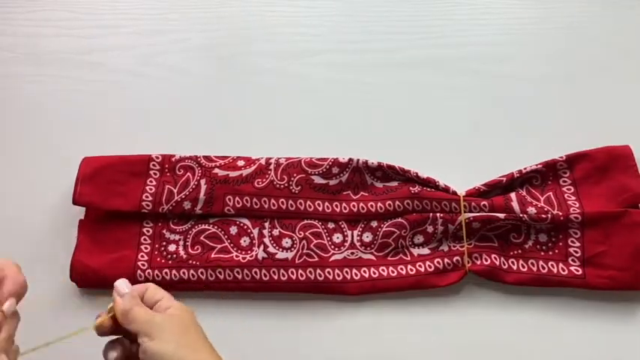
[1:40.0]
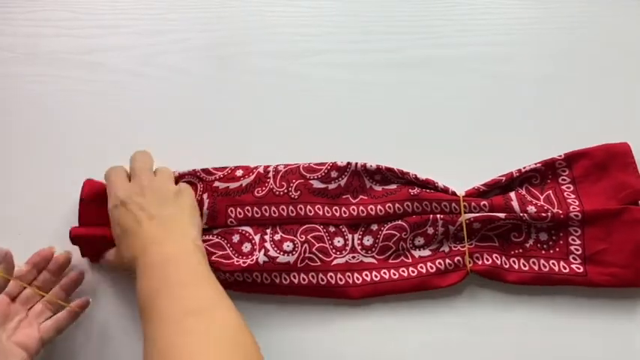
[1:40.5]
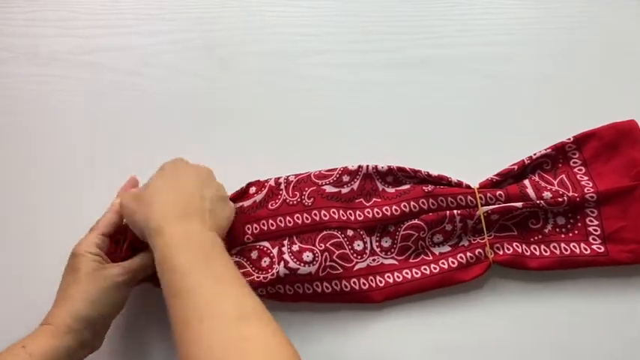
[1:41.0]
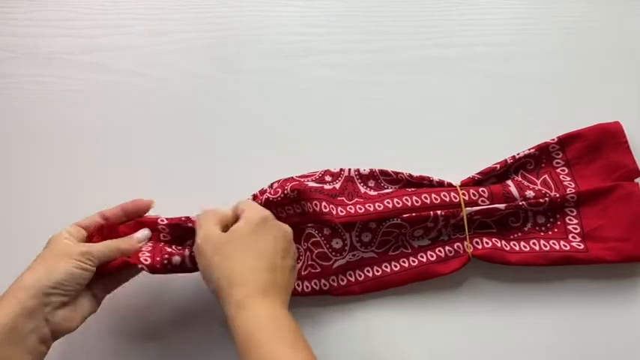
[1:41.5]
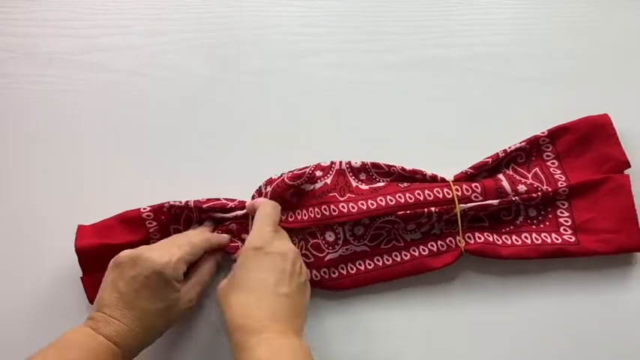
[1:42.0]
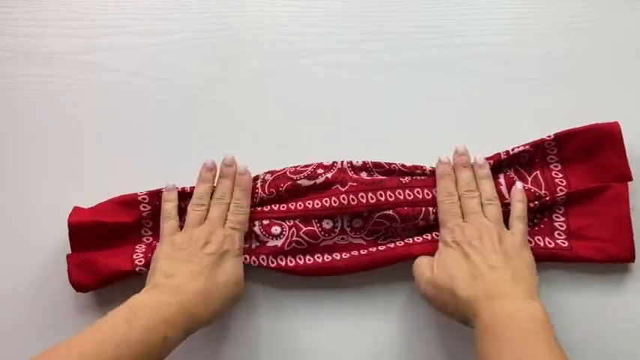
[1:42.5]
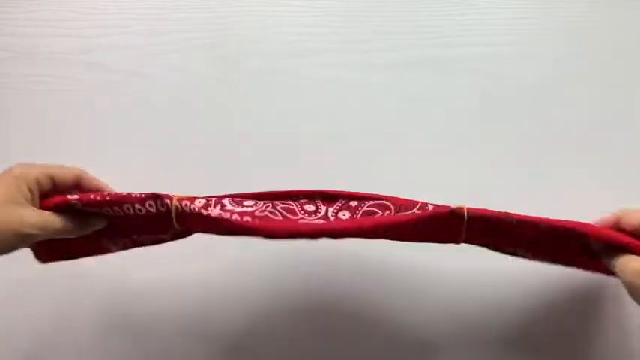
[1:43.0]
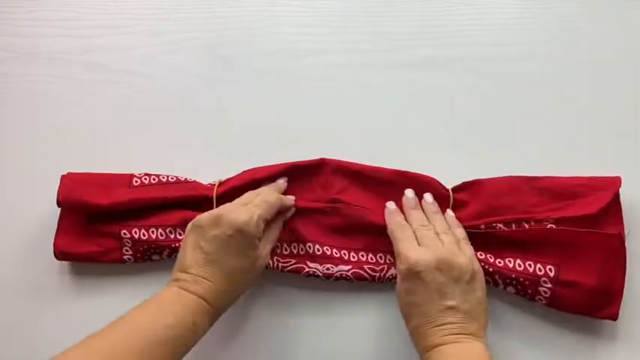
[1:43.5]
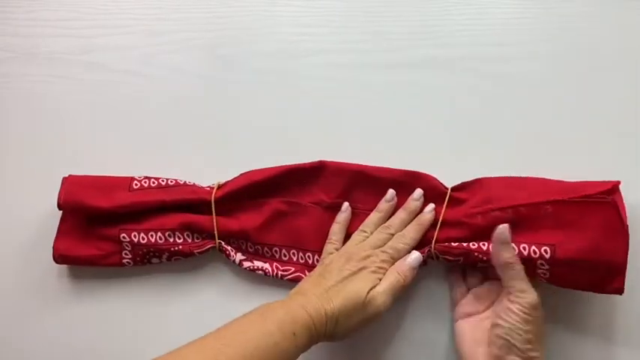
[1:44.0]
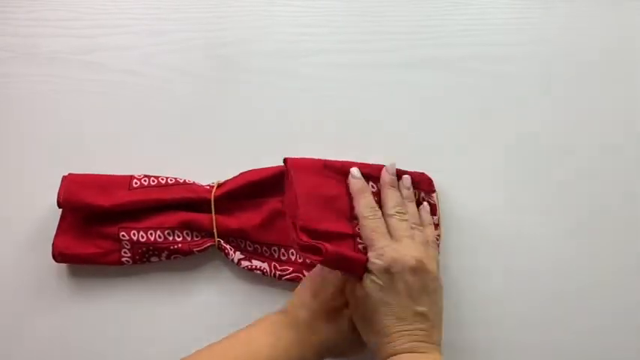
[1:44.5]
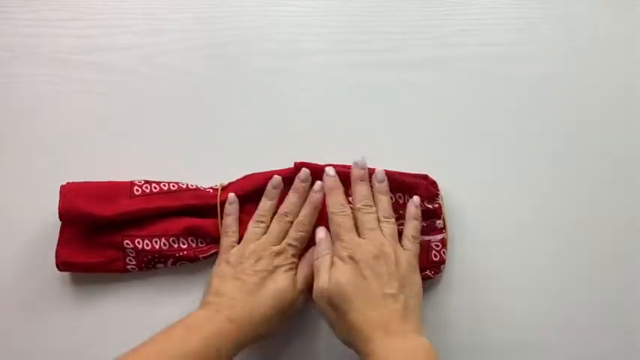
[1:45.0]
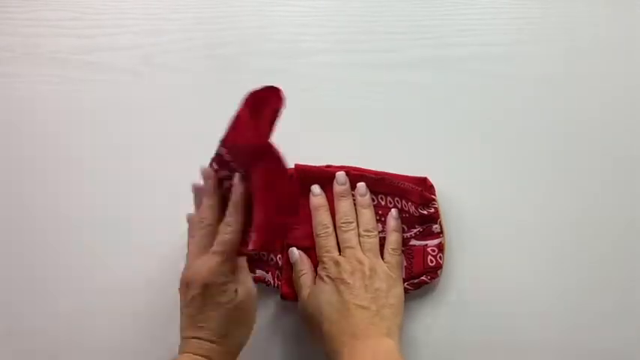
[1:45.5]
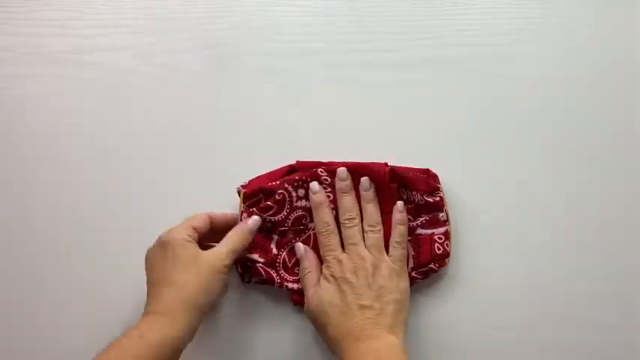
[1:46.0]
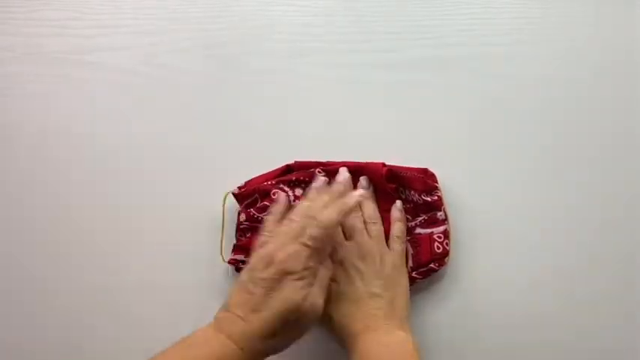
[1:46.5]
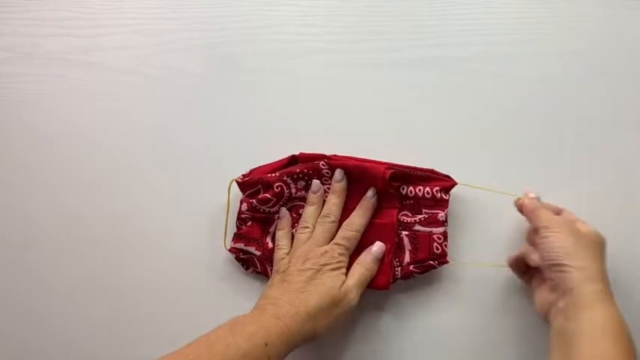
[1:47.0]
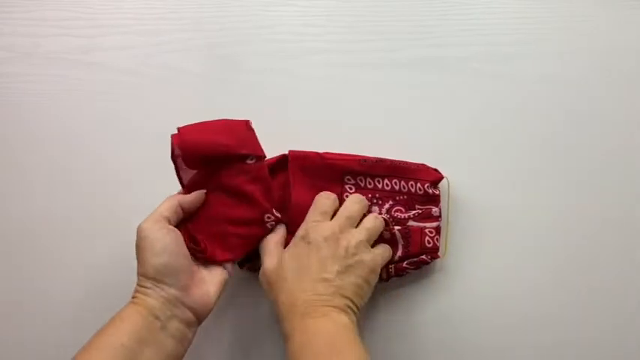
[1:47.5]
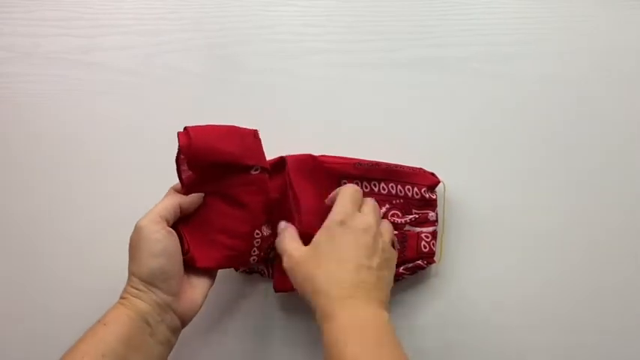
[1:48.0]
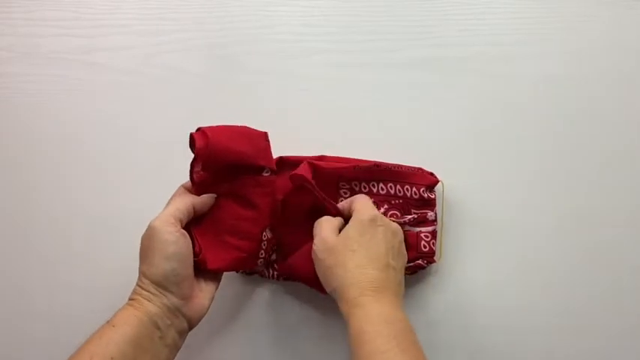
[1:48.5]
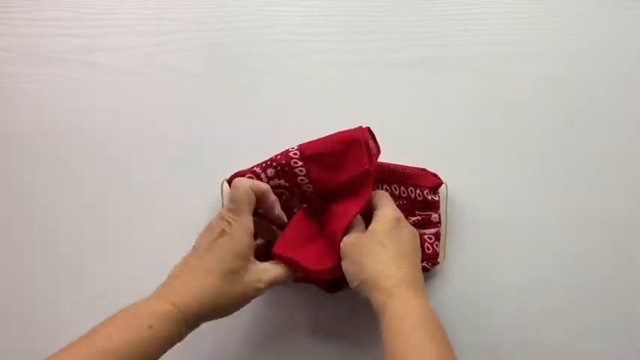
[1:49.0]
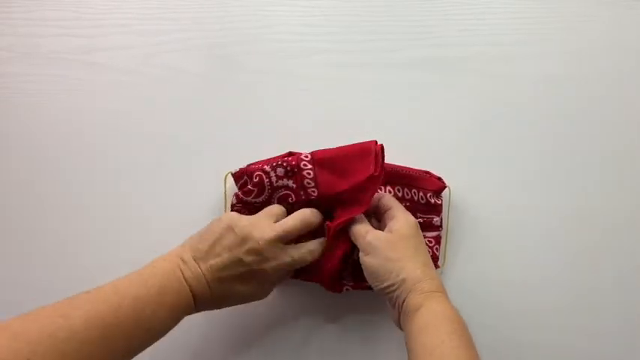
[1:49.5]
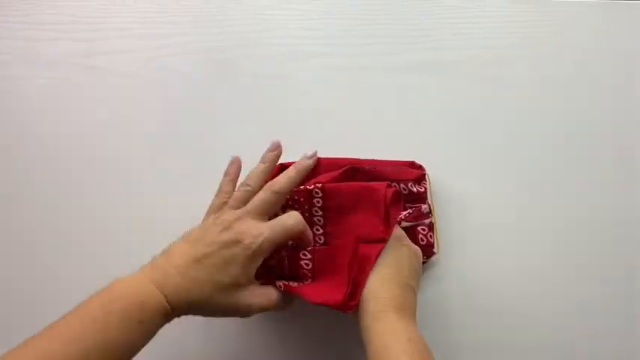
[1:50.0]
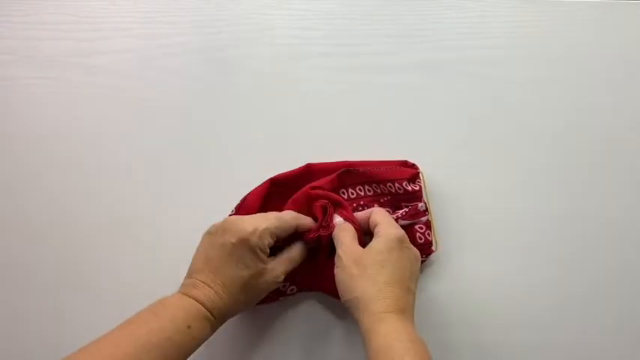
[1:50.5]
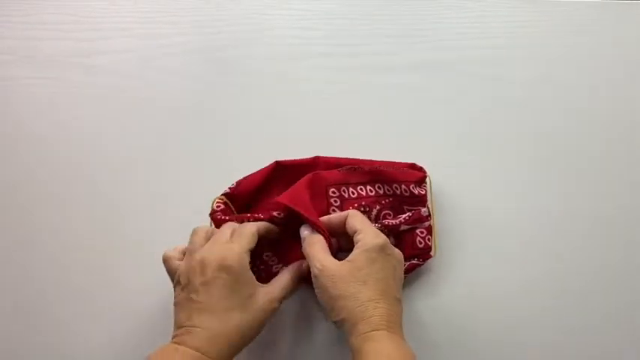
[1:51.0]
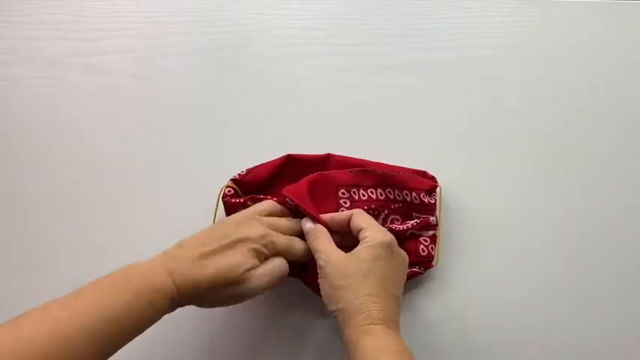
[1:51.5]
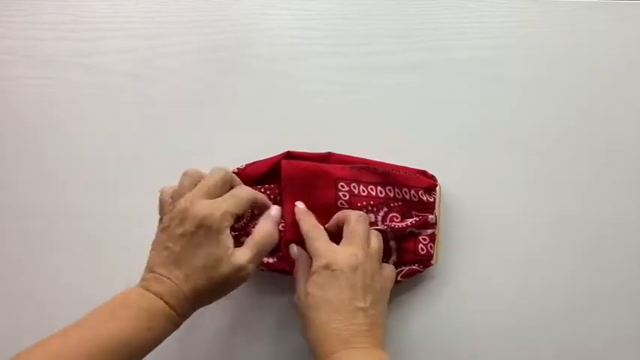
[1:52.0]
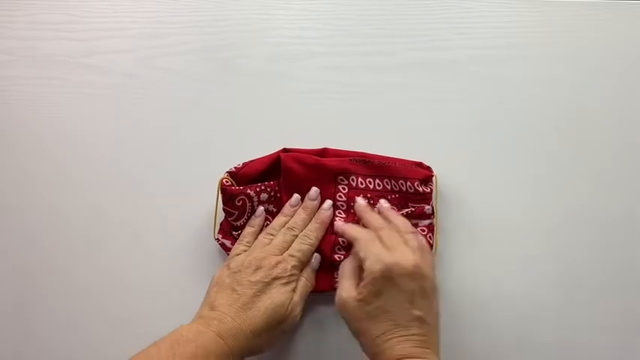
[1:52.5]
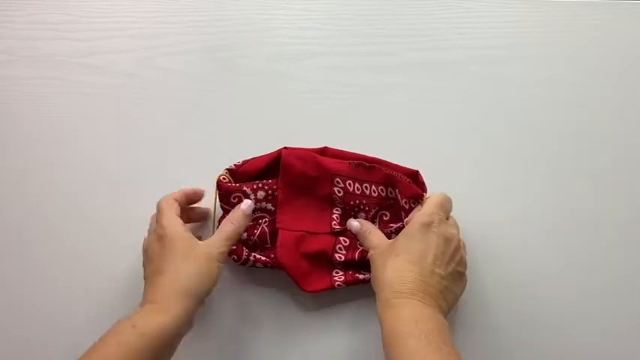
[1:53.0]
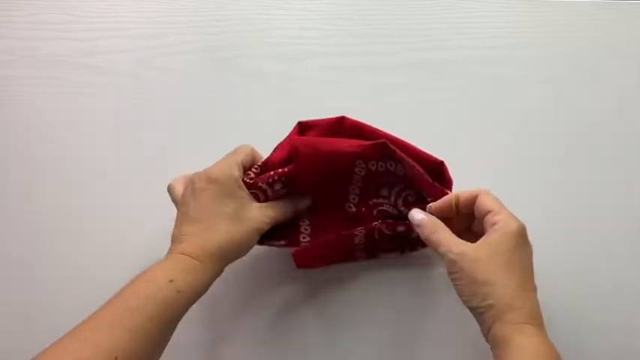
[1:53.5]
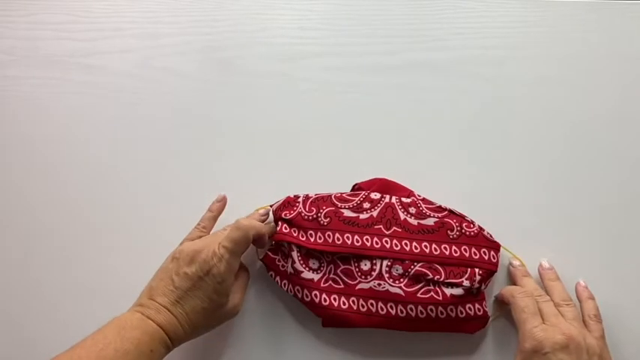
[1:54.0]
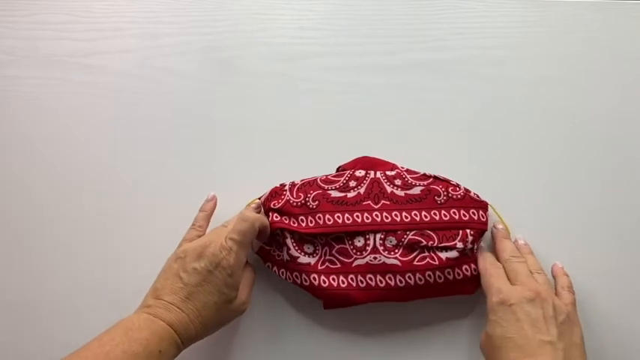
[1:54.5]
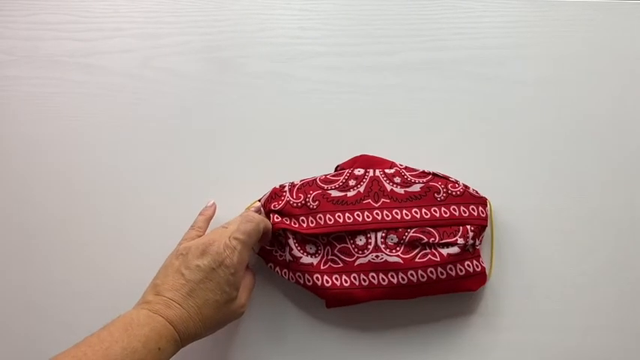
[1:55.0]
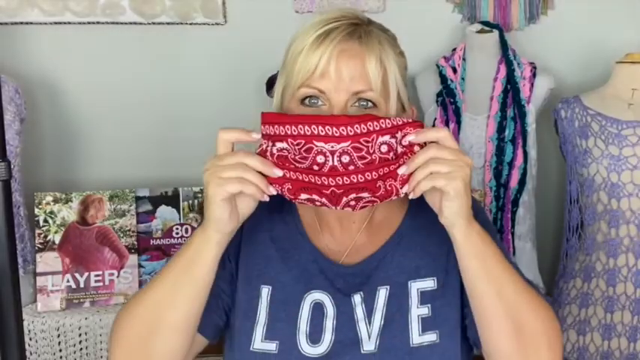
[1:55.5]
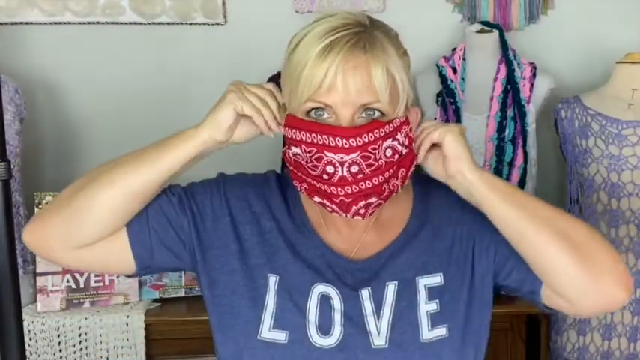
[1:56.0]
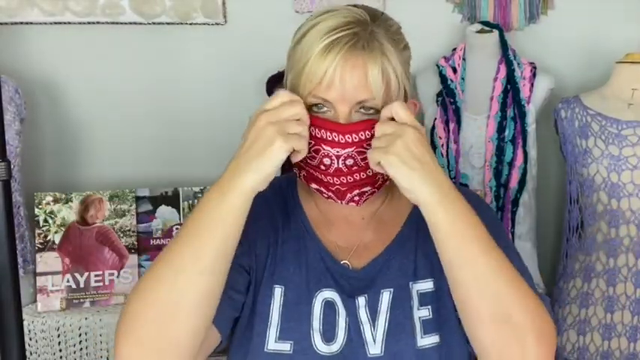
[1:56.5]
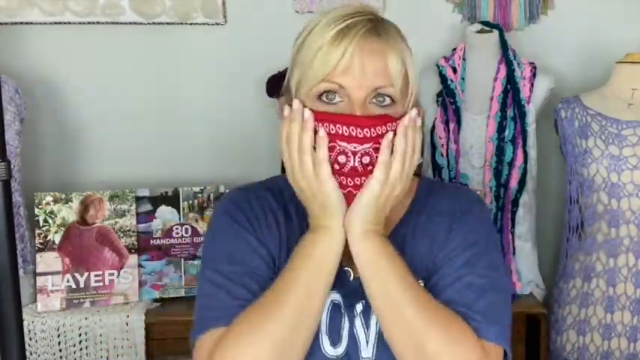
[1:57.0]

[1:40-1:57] A person's hands fold the ornate square of red linen on a white surface and put rubber bands at its ends. Both hands stretch the rubber band in the lower left corner of the frame. The left hand holds the linen in place while the right hand slips the rubber band under and around it. Both hands tug and pull the linen to the right. The whole red piece is smoothed down with both hands and flipped over. The left hand holds the middle portion down while the right hand grabs under the right portion and folds it left toward the center; the linen is smoothed, then the right hand holds it down while the left hand grabs under the left portion and folds it over the center. The rubber bands on each side are pulled out to the left and right as the hands slip and rearrange the center portion. The red cloth is then flipped over. A woman with blonde hair, wearing a blue shirt with white text on the front reading "LOVE life," puts the DIY face mask up to her face and hooks it around her ears. She smooths the mask out while turning her head to her right.